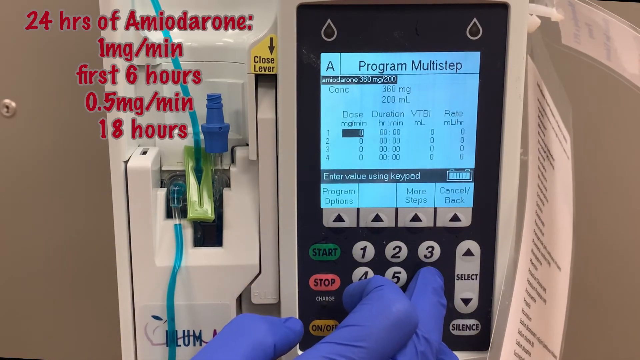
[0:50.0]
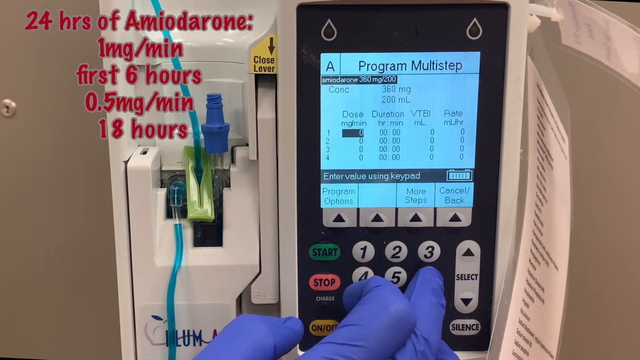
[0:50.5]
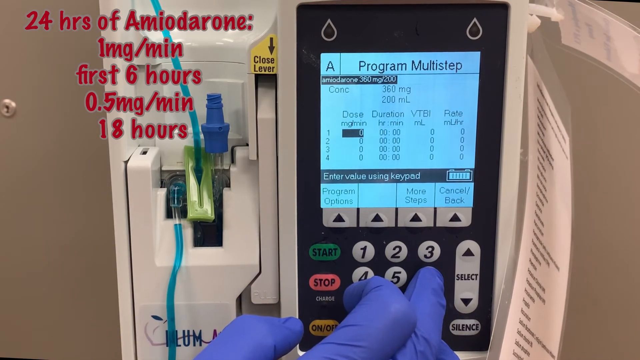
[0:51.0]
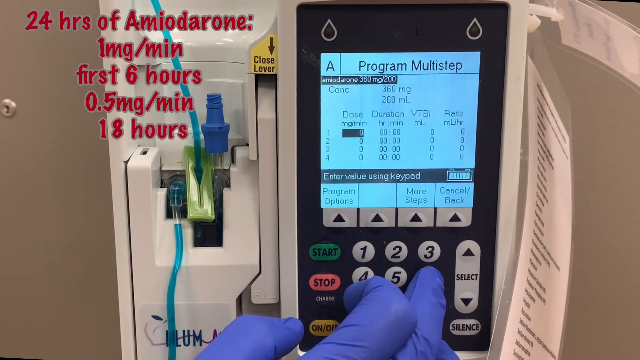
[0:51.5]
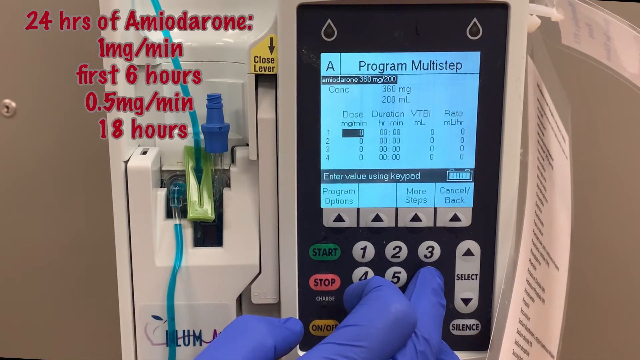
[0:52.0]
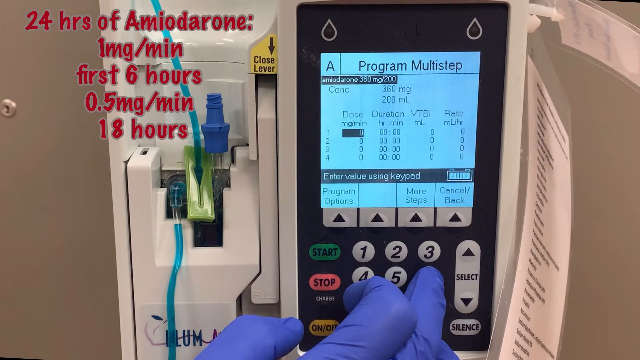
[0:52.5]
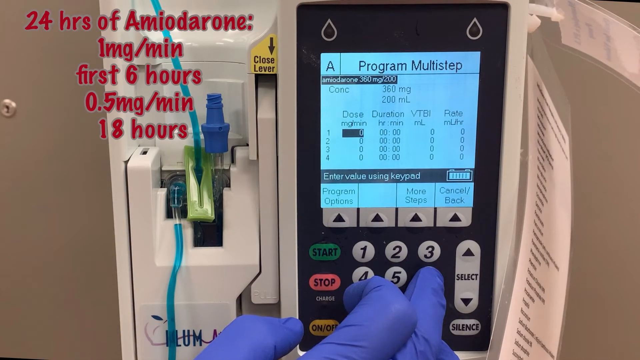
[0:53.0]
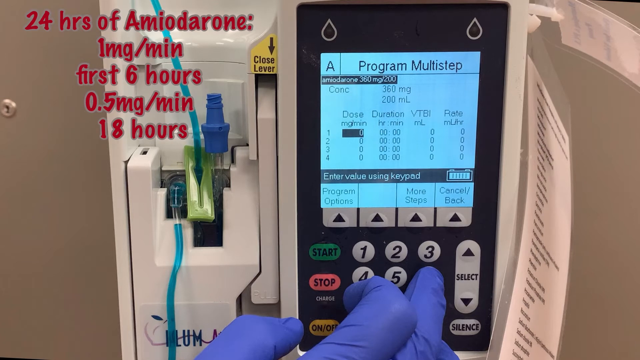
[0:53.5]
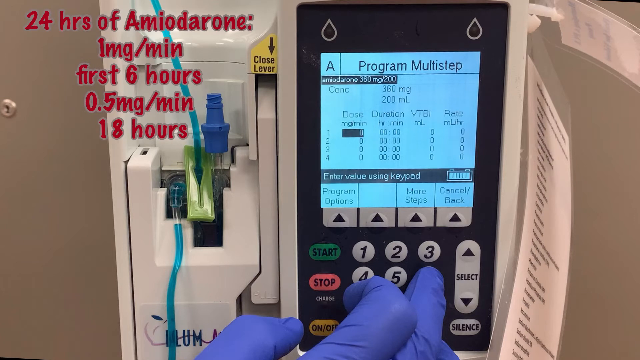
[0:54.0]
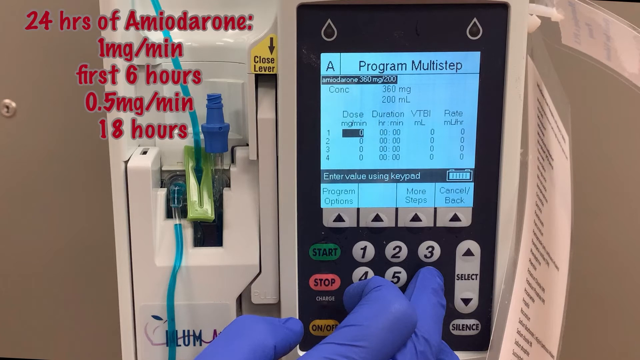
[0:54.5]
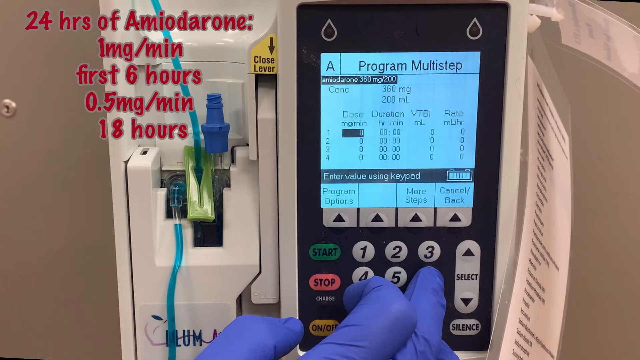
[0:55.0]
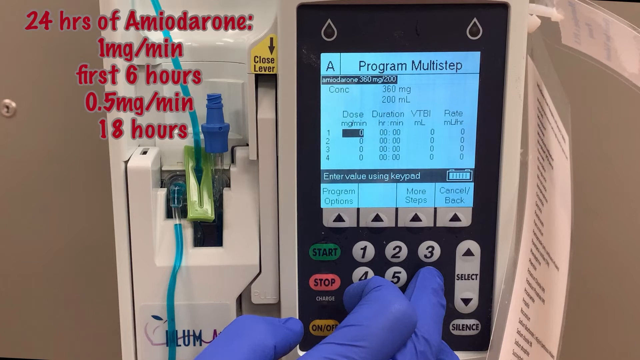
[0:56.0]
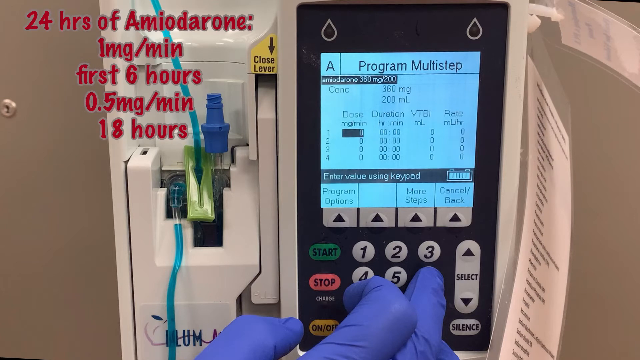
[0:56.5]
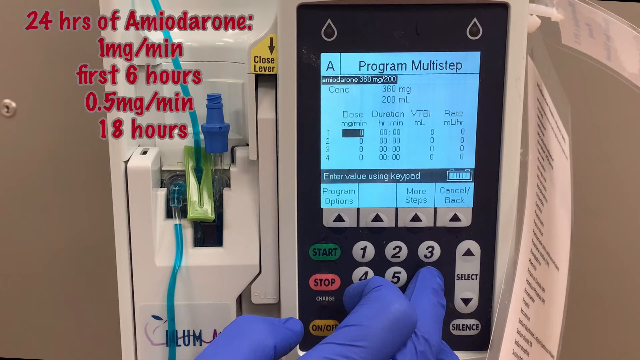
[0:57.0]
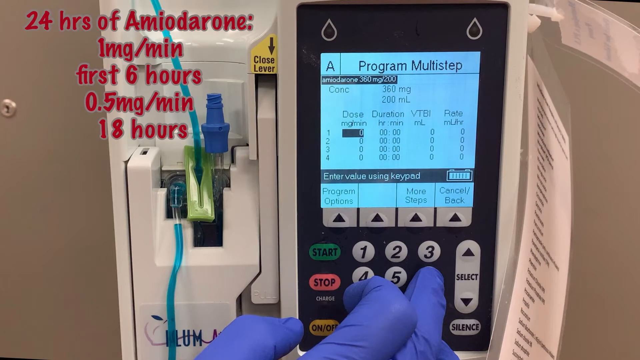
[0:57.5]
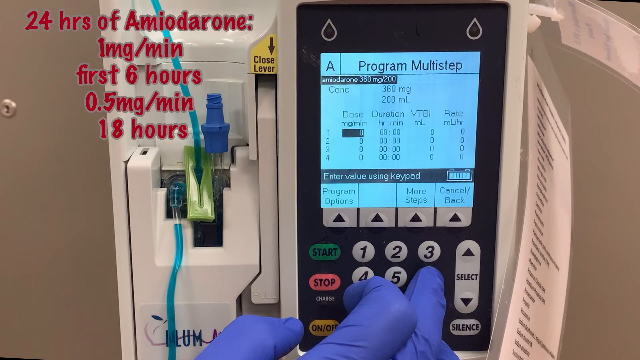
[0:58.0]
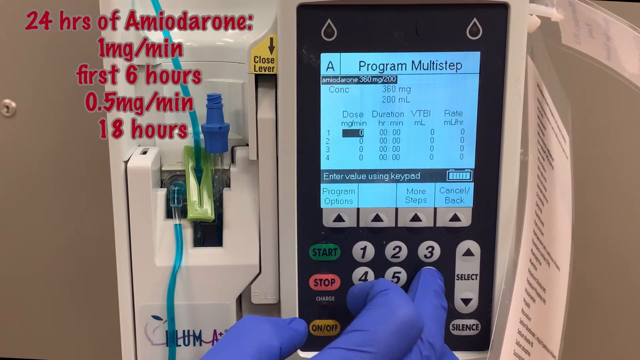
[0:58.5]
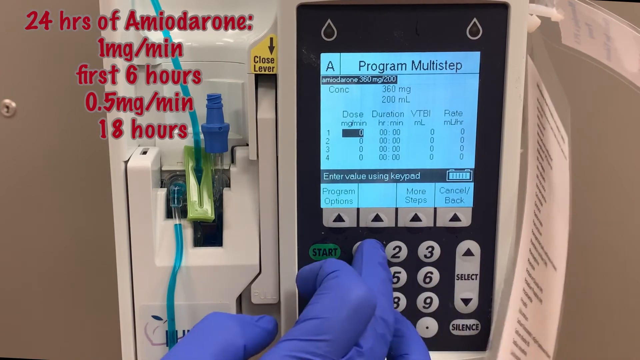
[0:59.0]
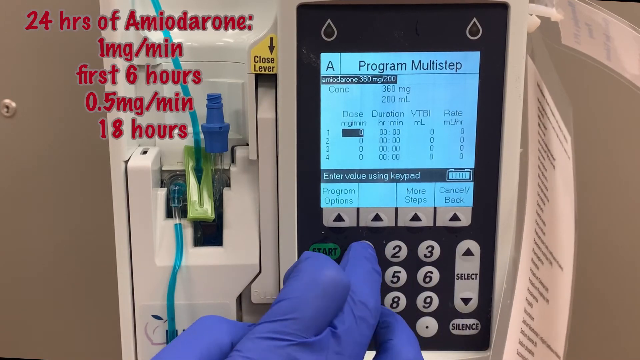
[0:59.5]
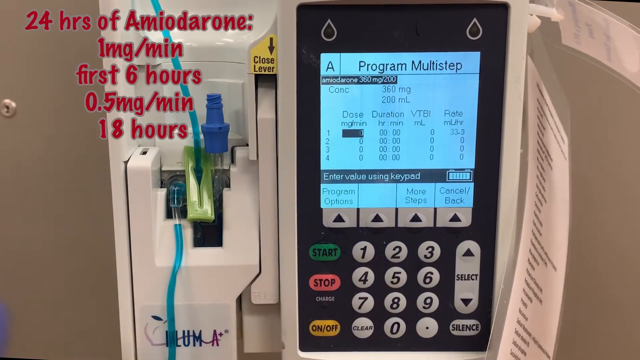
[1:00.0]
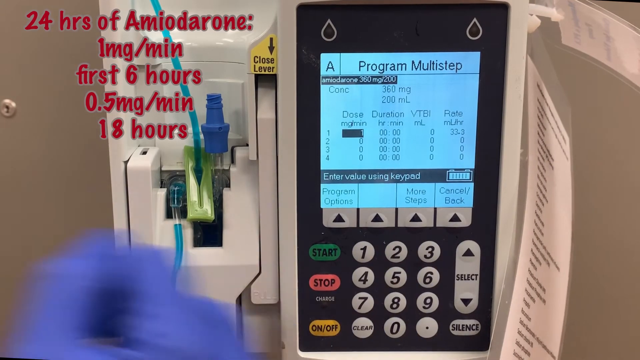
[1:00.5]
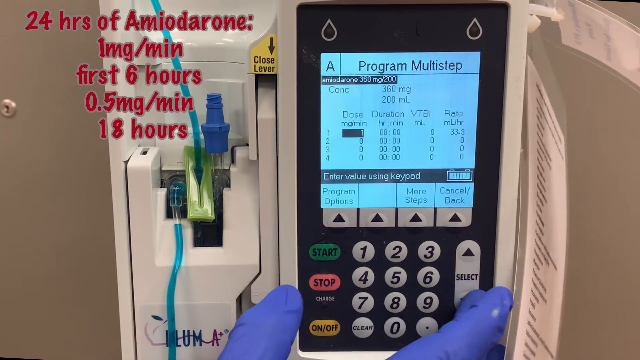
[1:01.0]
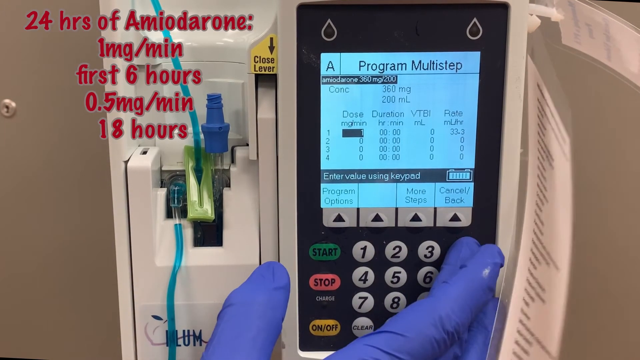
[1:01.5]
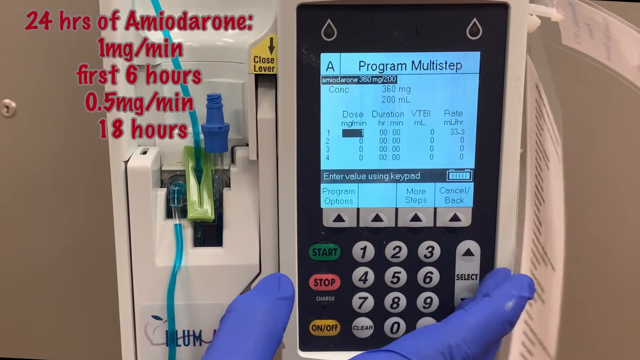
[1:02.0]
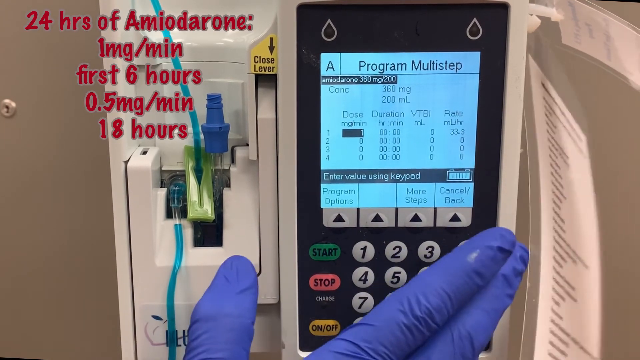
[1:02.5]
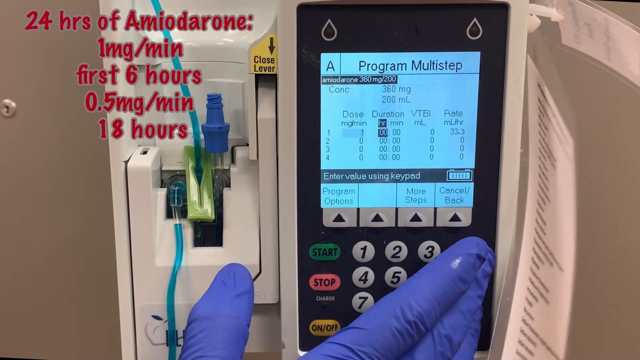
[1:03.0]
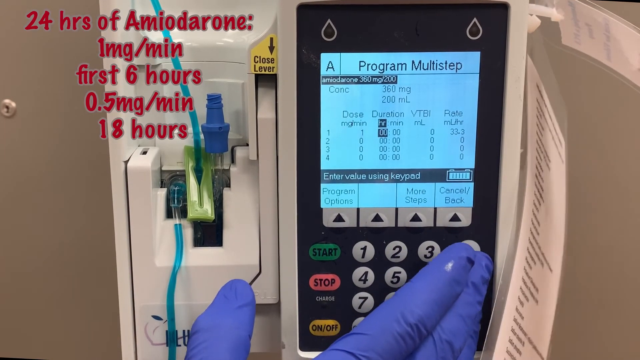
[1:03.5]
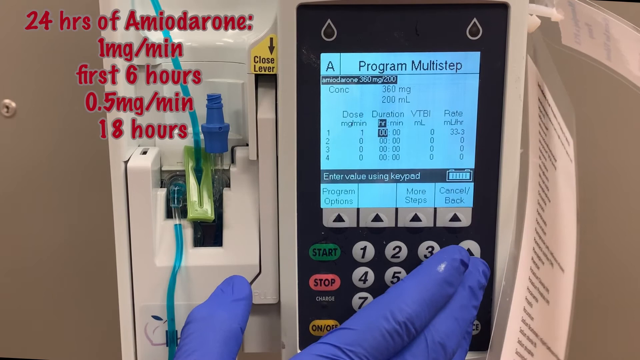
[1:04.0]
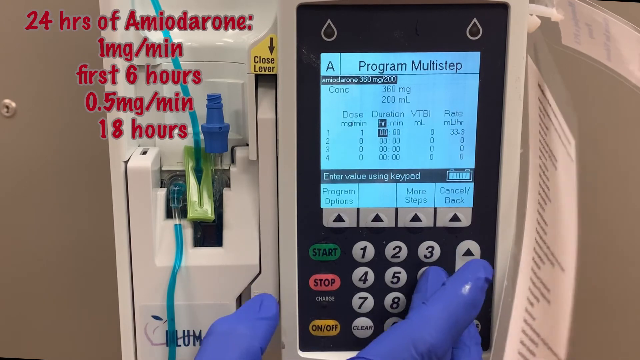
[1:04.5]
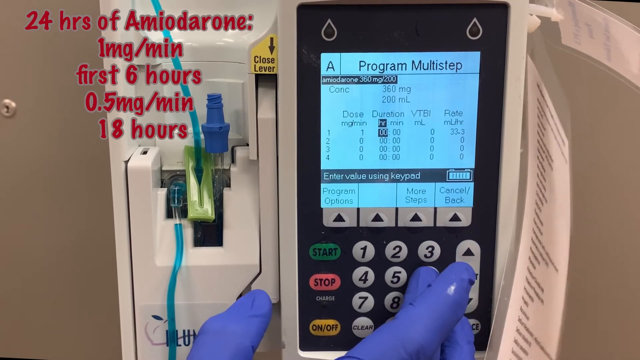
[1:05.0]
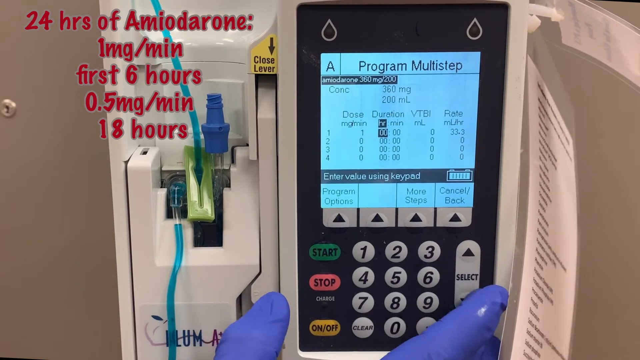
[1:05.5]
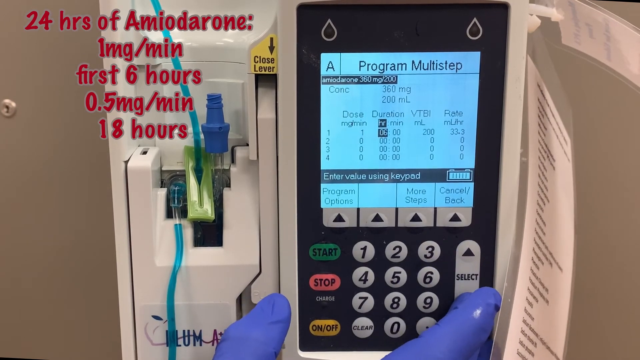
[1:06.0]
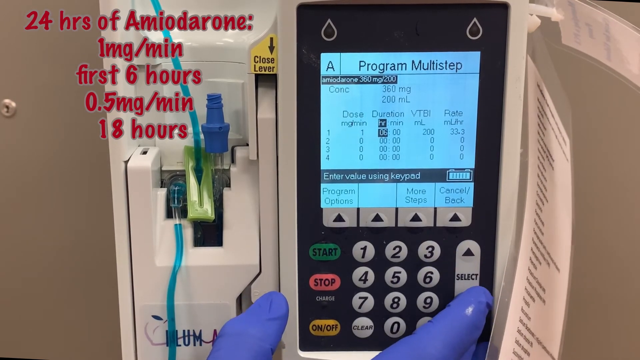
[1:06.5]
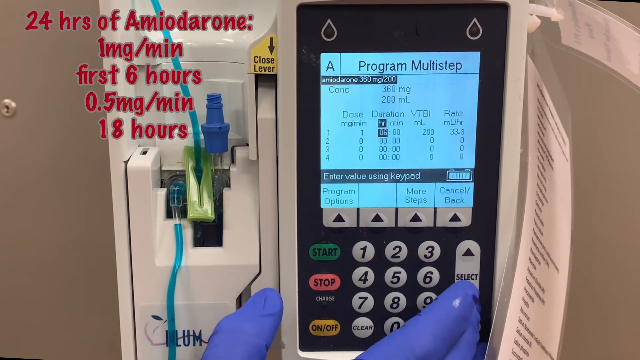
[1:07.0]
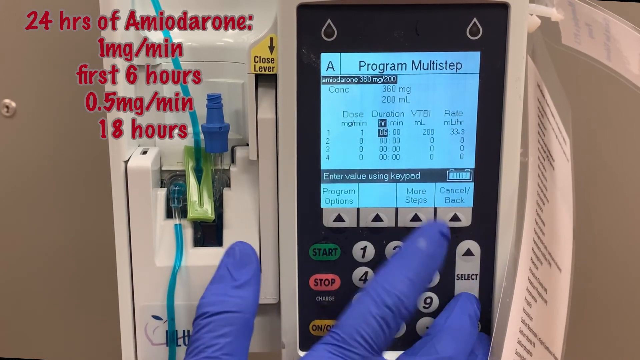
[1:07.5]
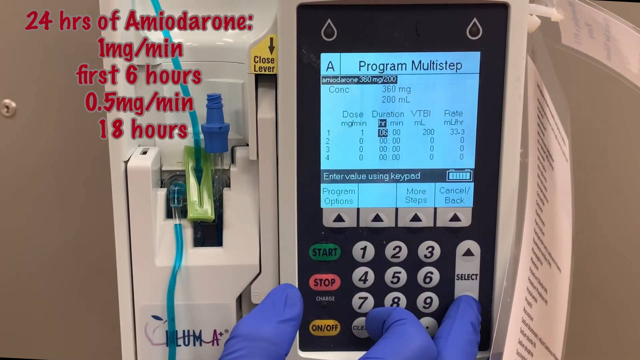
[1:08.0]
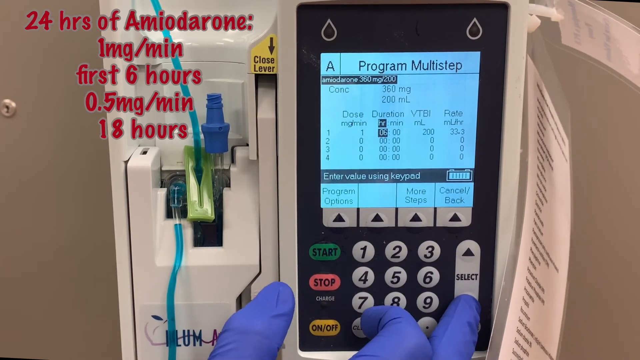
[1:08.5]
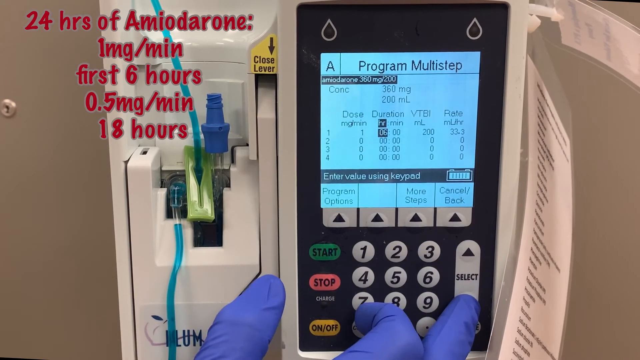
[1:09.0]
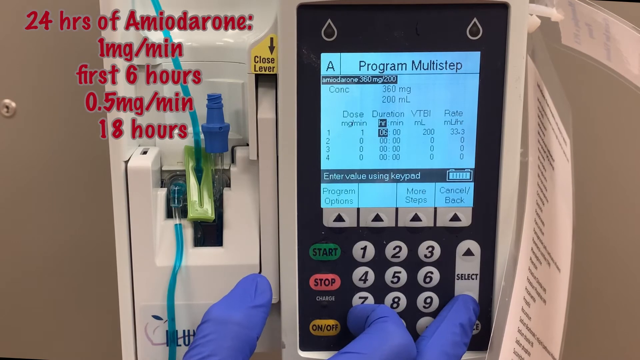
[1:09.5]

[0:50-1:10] After several seconds, the medical professional starts pressing buttons, entering one milligram per minute into the first row, first column, beginning the multi-step program setup. They press one, move over to select the duration, and set it to six hours and zero minutes, then press the select button to lock it in. Step one is now set at one milligram per minute for six hours, and it appears they are ready to move to the next step.